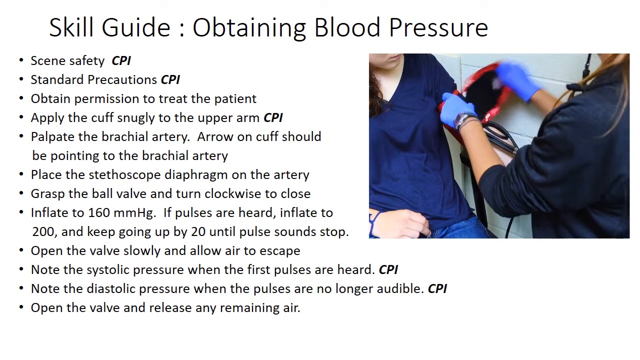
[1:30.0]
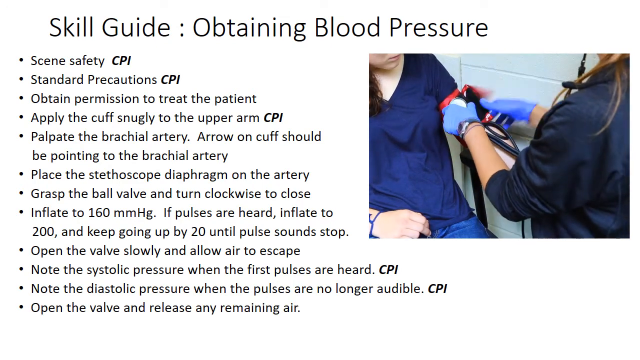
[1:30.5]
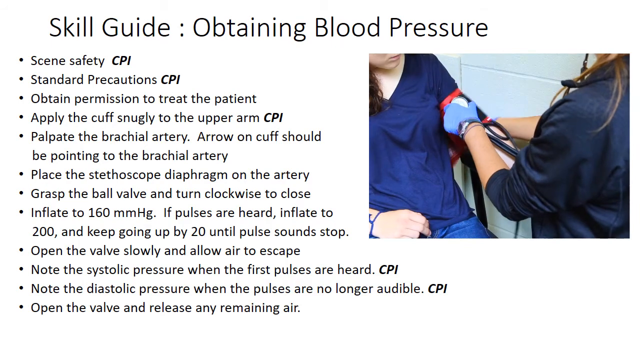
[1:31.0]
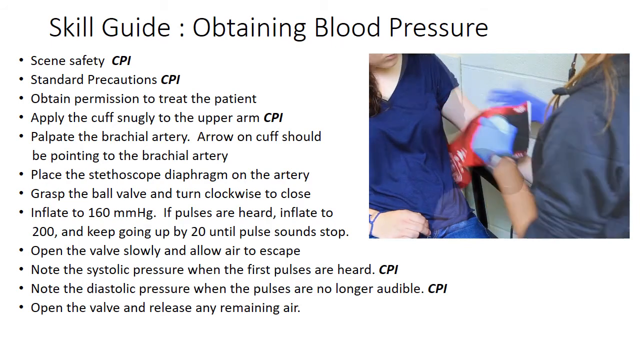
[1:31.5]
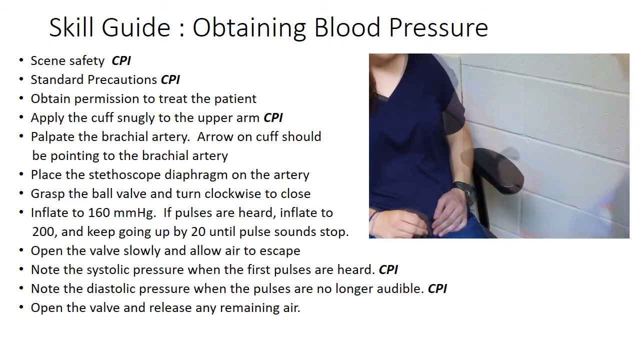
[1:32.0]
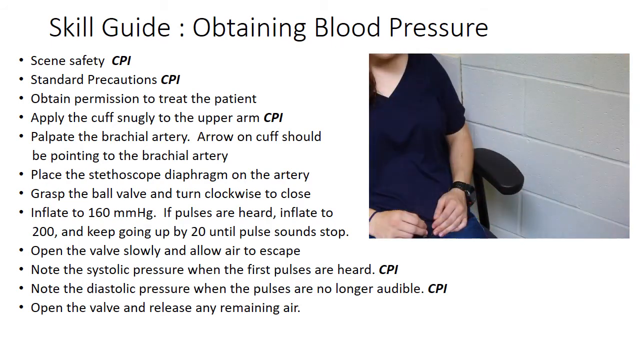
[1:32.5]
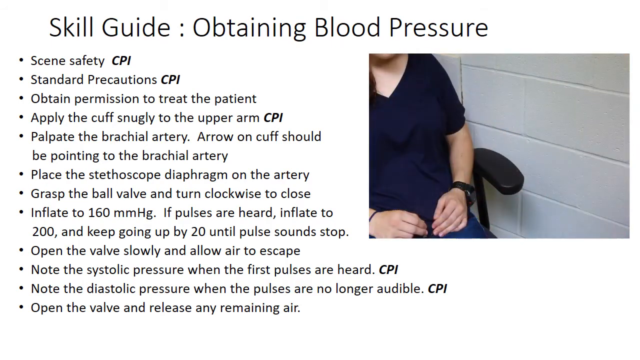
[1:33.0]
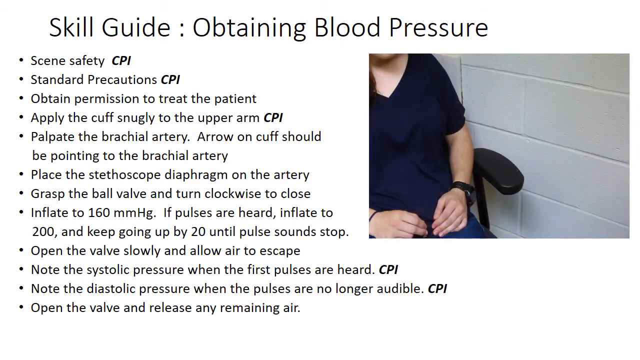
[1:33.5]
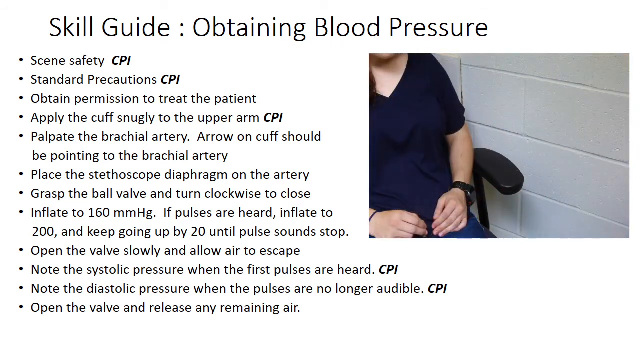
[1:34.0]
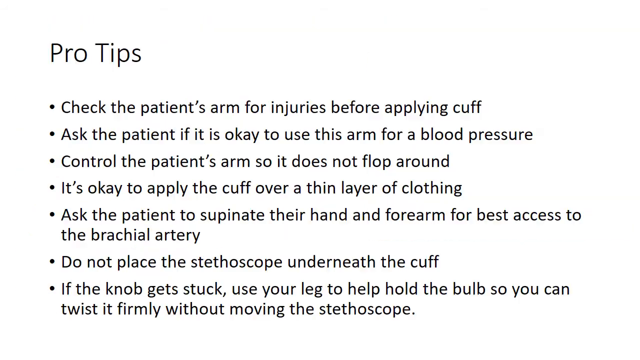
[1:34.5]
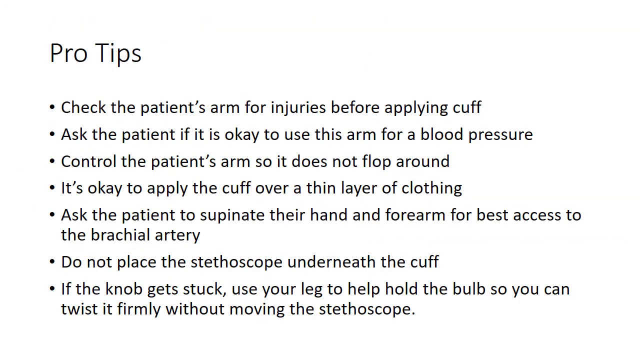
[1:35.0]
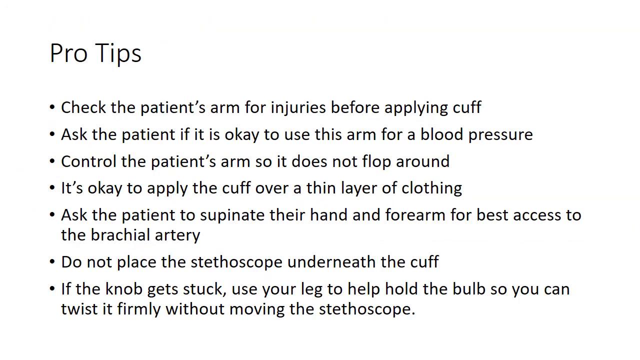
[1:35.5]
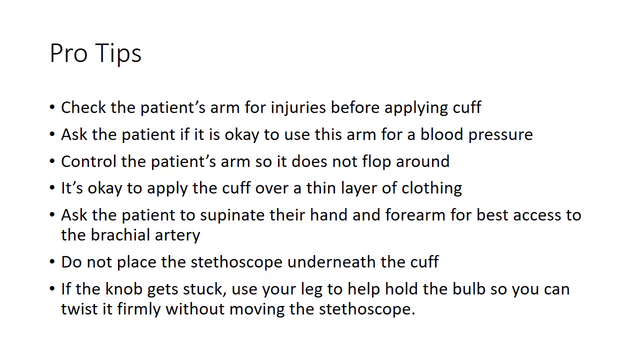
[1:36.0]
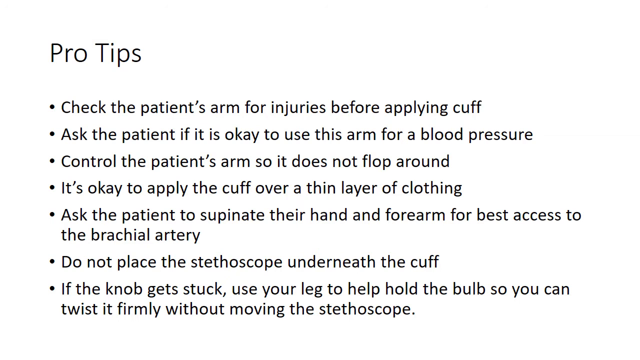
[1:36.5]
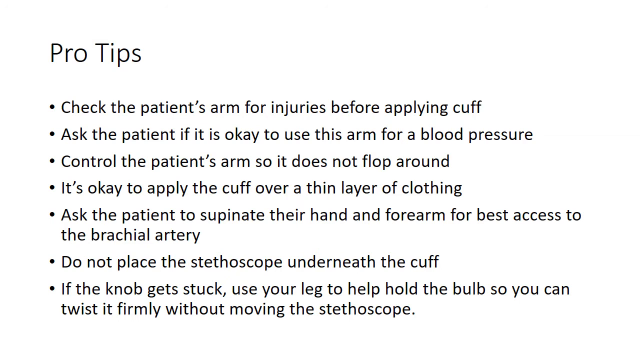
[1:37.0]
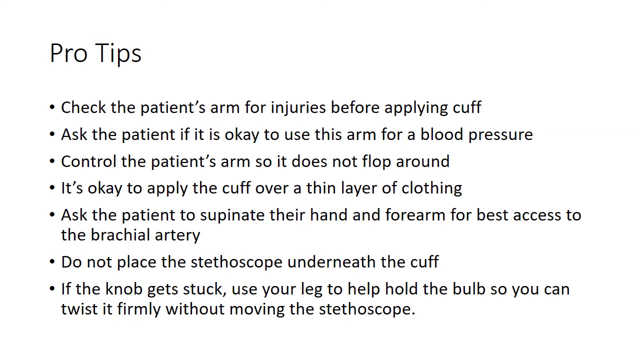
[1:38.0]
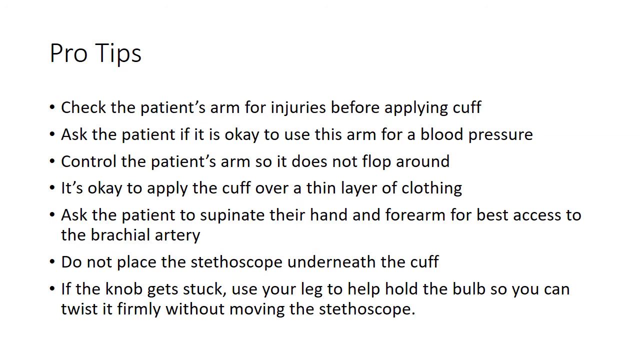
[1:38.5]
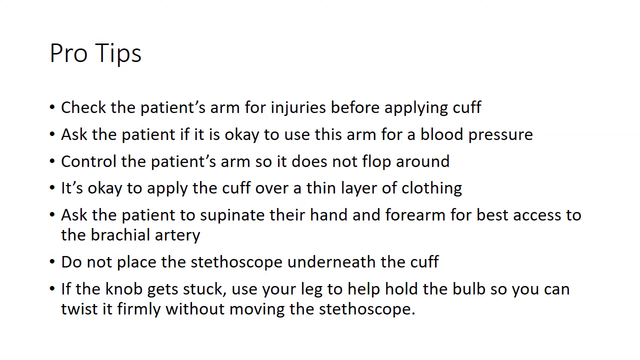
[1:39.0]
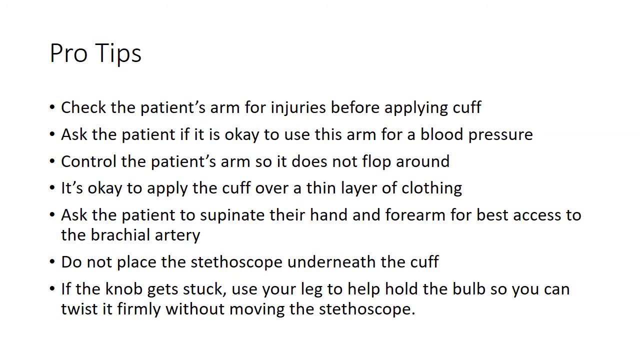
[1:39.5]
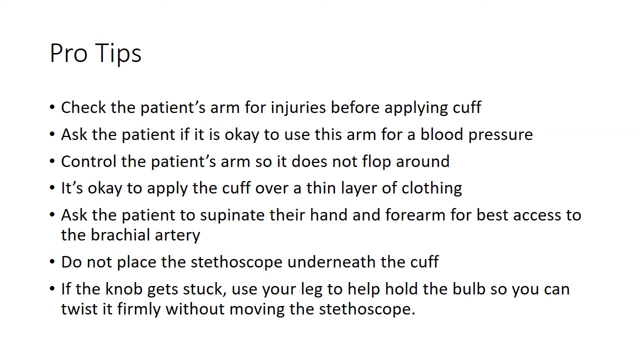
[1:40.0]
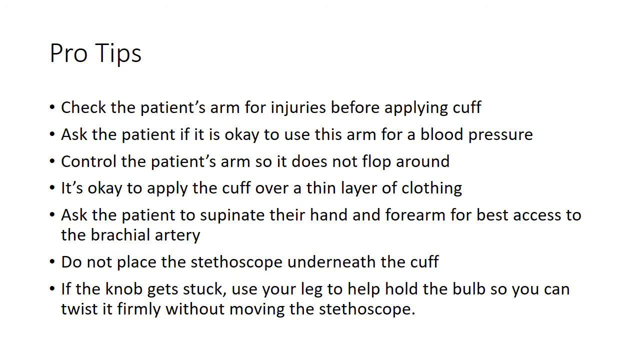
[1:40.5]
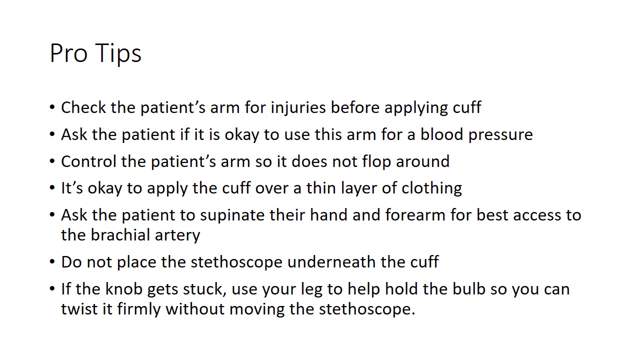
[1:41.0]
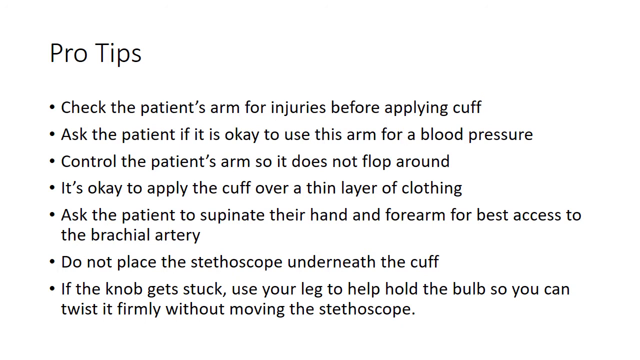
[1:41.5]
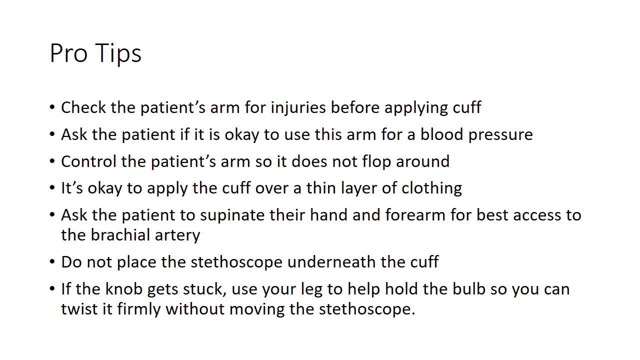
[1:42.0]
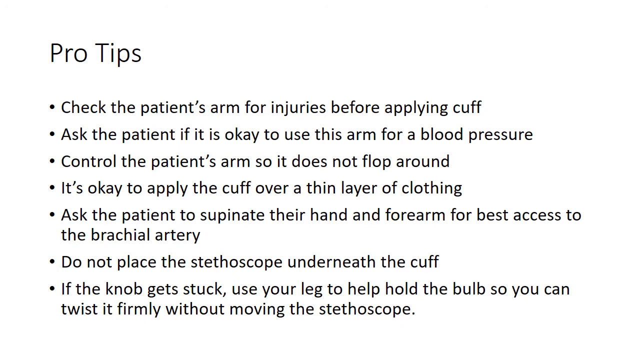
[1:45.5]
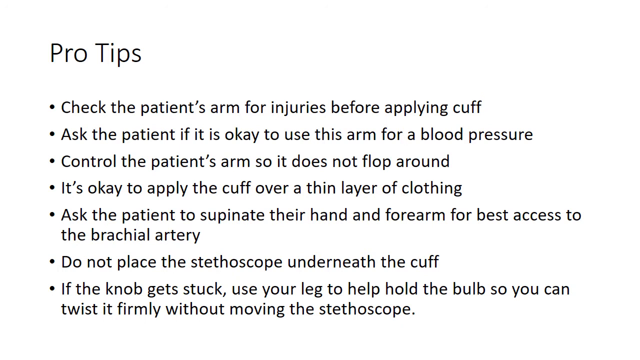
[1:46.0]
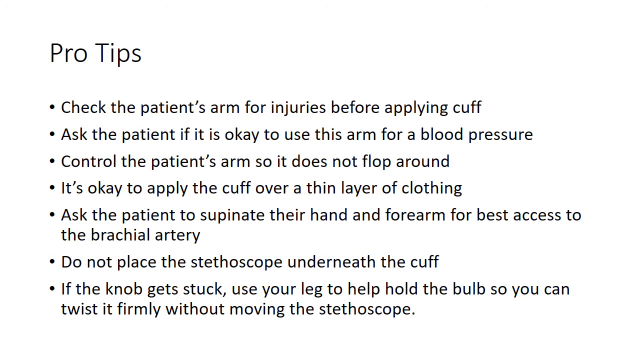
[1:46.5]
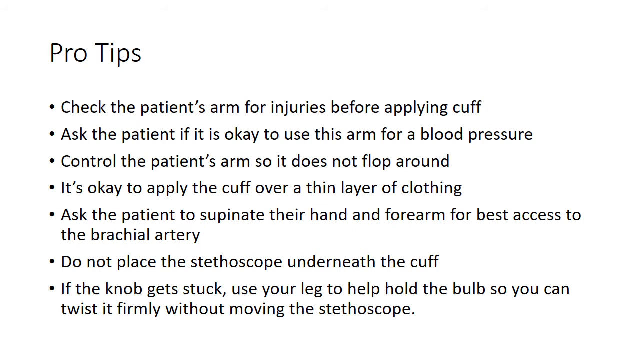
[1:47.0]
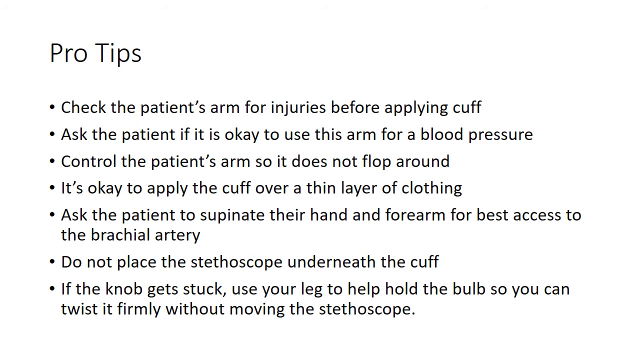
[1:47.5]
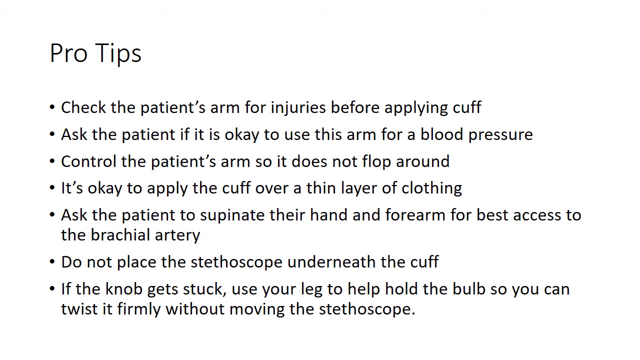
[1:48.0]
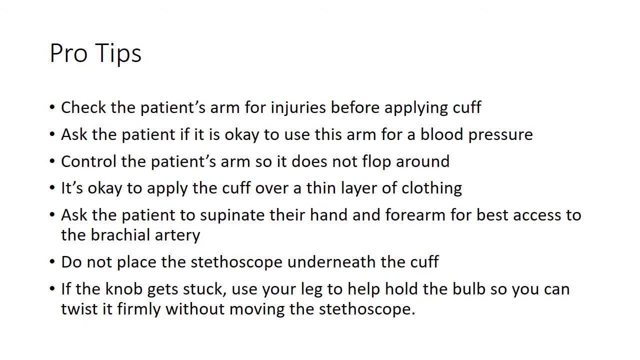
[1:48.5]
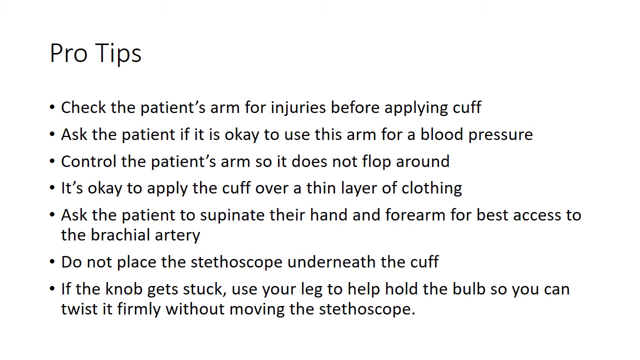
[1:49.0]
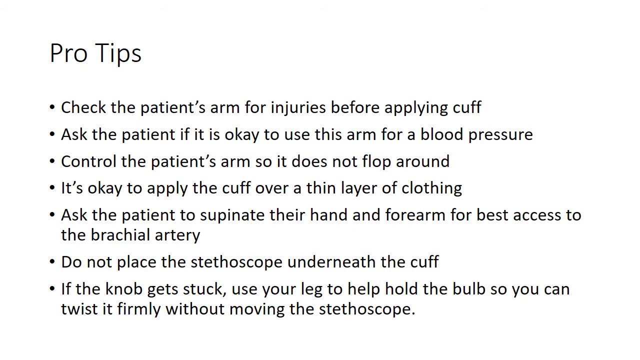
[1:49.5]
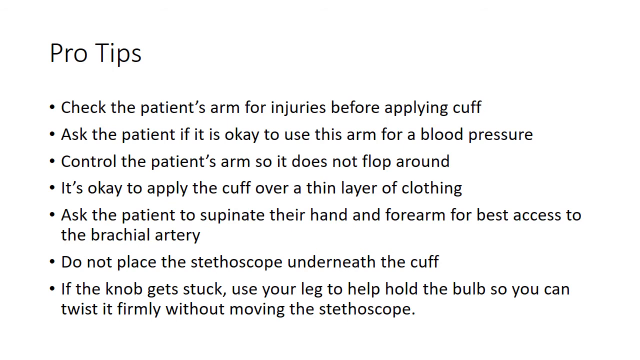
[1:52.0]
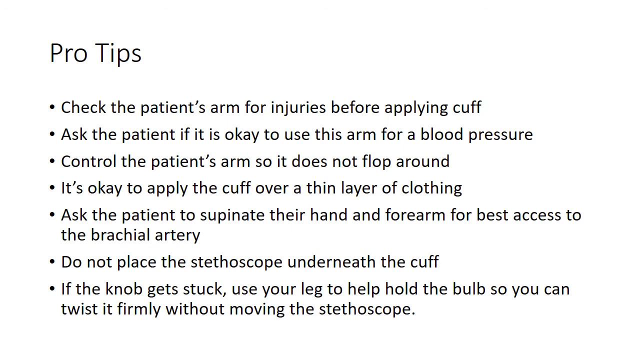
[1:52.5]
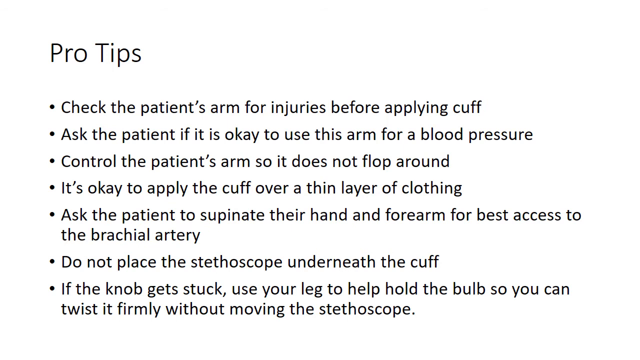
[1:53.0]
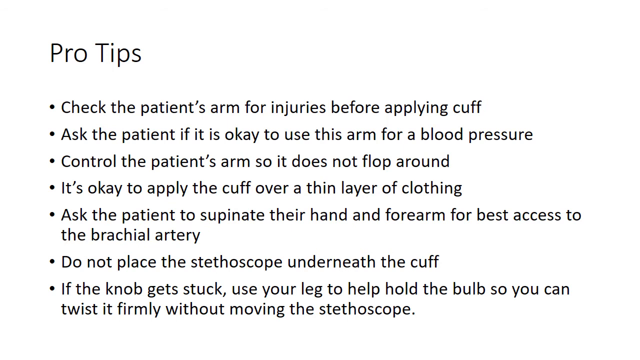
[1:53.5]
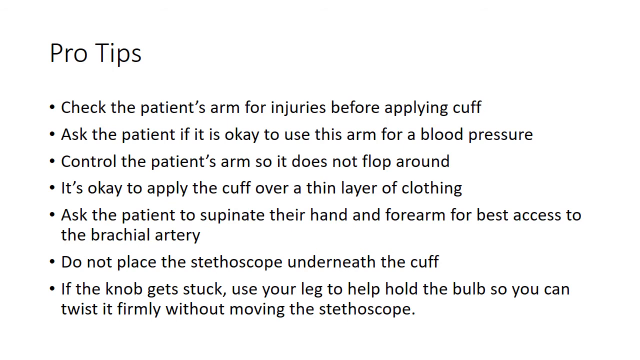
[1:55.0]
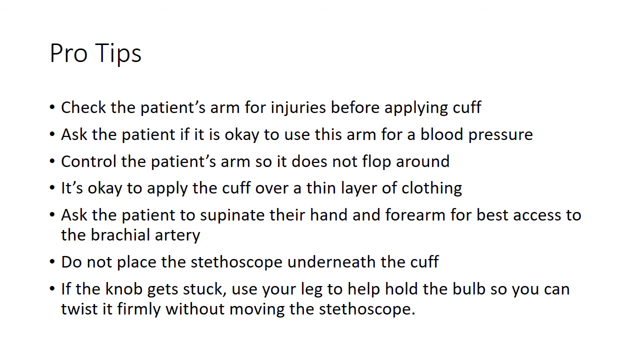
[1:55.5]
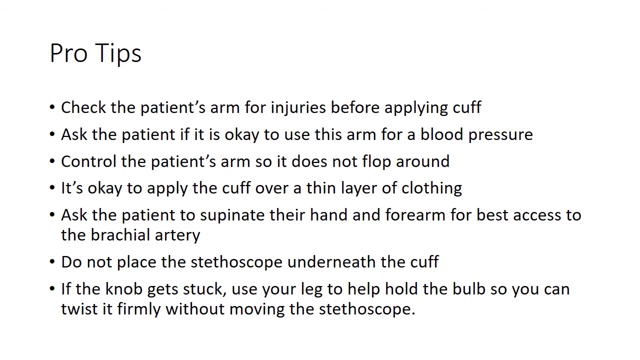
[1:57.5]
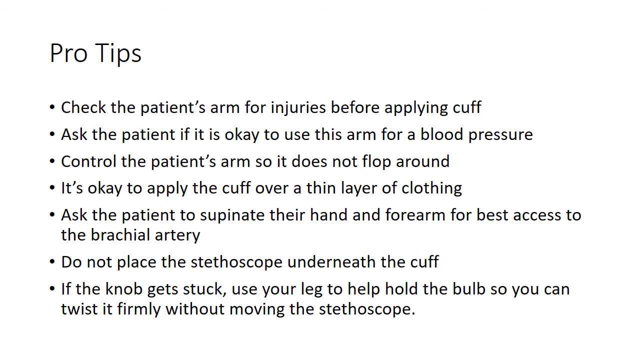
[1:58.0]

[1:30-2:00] A title reads "Skill guide obtaining blood pressure," with a bulleted list of steps: "scene safety, CPI," "standard precautions, CPI," "obtain permission to treat the patient," "apply the cuff snugly to the upper arm, CPI," "palpate the brachial artery," "arrow on cuff should be pointed to the brachial artery," "place the stethoscope diaphragm on the artery," "grasp the valve and turn clockwise to close," "inflate to 160 mmHg. If pulses are heard, inflate to 200 and keep going up by 20 until pulse sounds stop," "open the valve slowly and allow air to escape," "note the systolic pressure when the first pulses are heard, CPI" and "note the diastolic pressure when the pulses are no longer audible, CPI." A picture shows a person seated in a navy V-neck shirt, and a person across from them taking their blood pressure with a red blood pressure cuff. The person taking the blood pressure then removes the cuff. The screen then turns to pro tips: "check the patient's arm for injuries before applying cuff," "ask the patient if it is okay to use this arm for a blood pressure," "control the patient's arm so it does not flop around," "it's okay to apply the cuff over a thin layer of clothing," "ask the patient to supinate their hand and forearm for best access to the brachial artery," "do not place the stethoscope underneath the cuff" and "if the knob gets stuck, use your leg to help hold the bulb so you can twist it firmly without moving the stethoscope." In the top right corner, a seated person is having their blood pressure measured; a person across from her, wearing a stethoscope and with gloved hands, removes the blood pressure cuff after the reading is given.